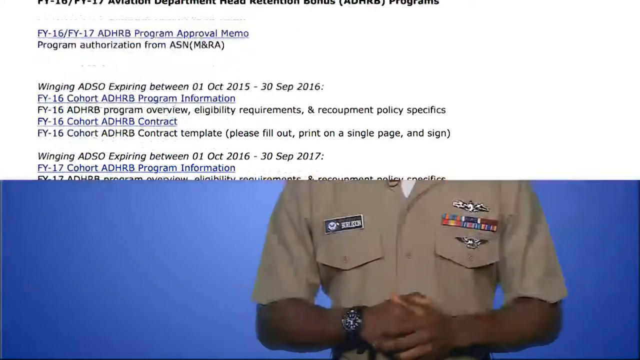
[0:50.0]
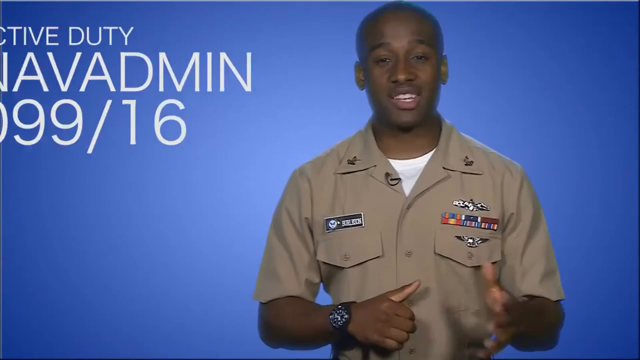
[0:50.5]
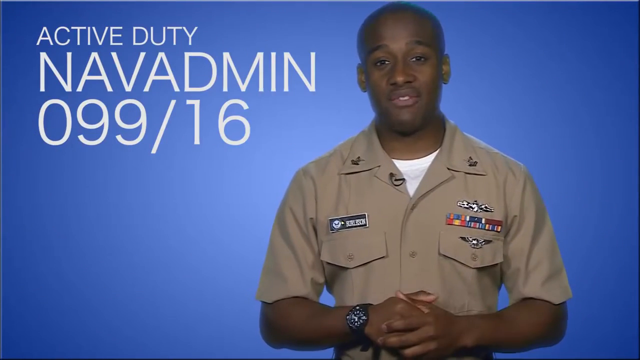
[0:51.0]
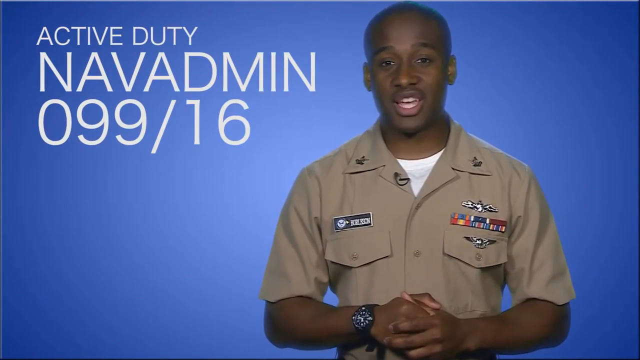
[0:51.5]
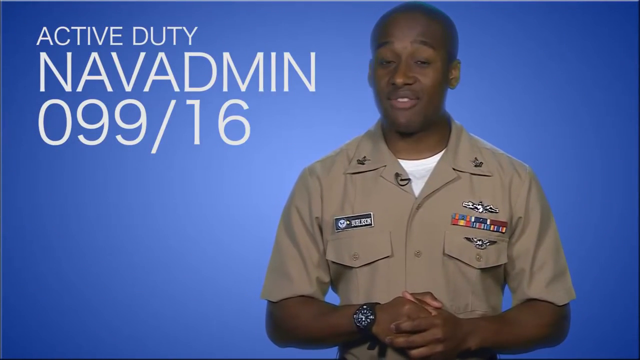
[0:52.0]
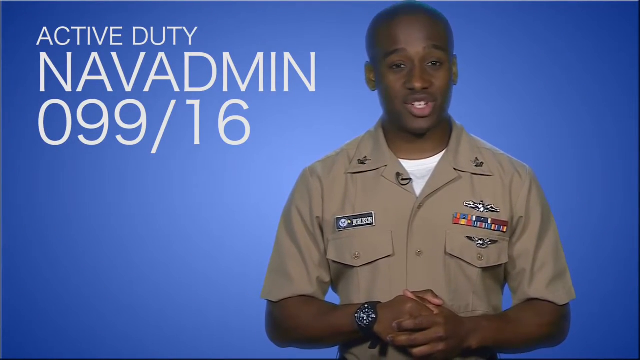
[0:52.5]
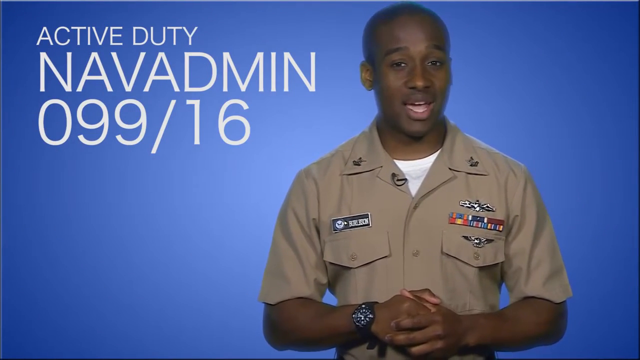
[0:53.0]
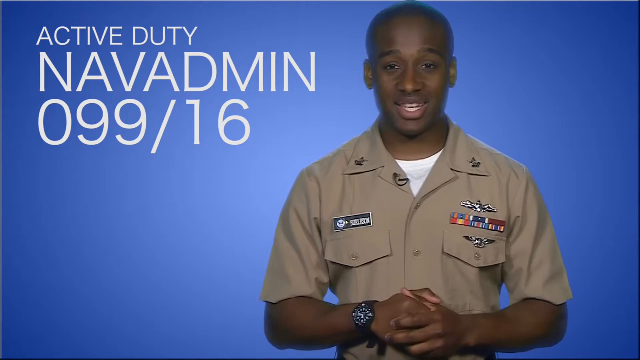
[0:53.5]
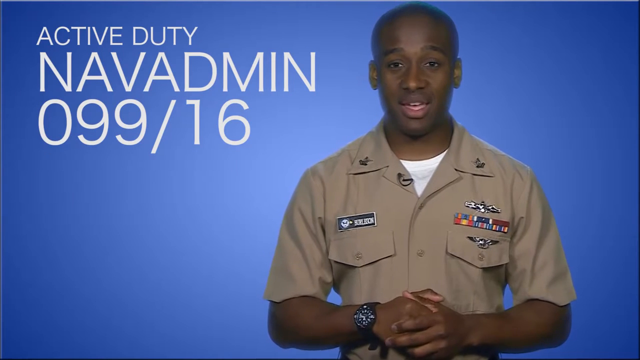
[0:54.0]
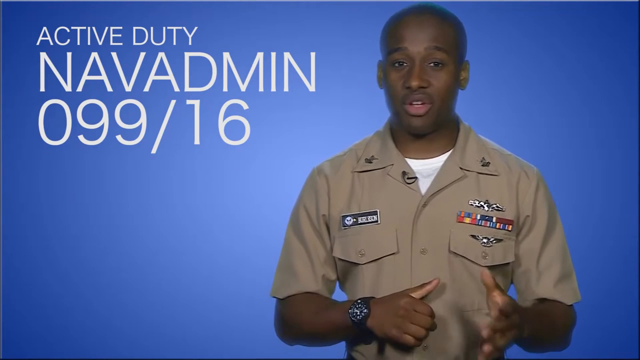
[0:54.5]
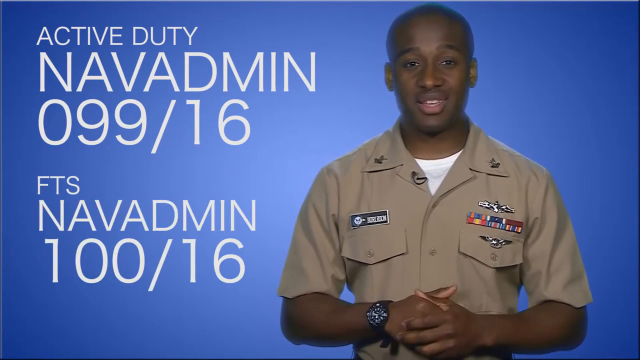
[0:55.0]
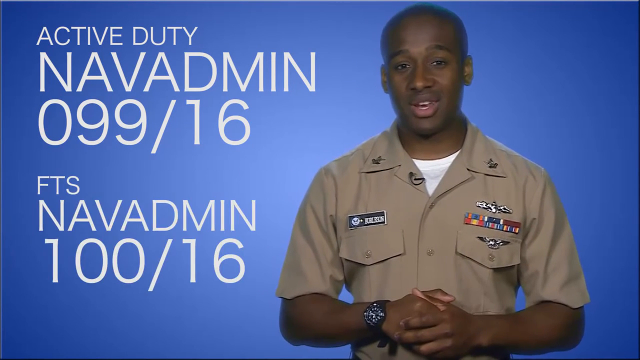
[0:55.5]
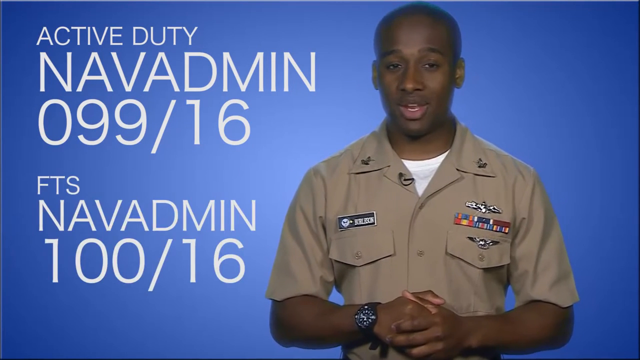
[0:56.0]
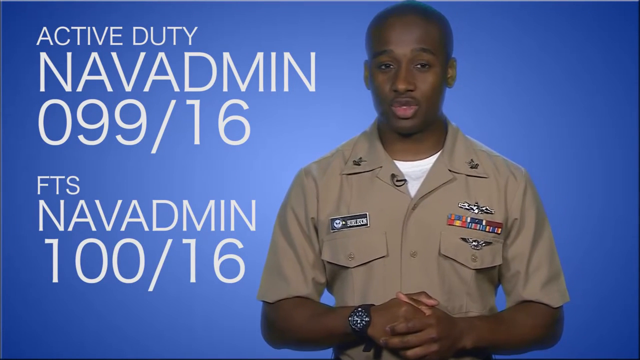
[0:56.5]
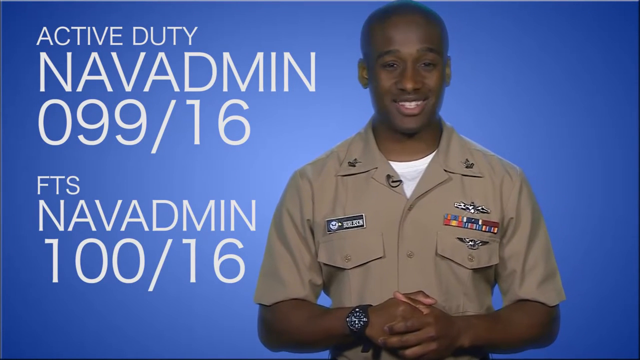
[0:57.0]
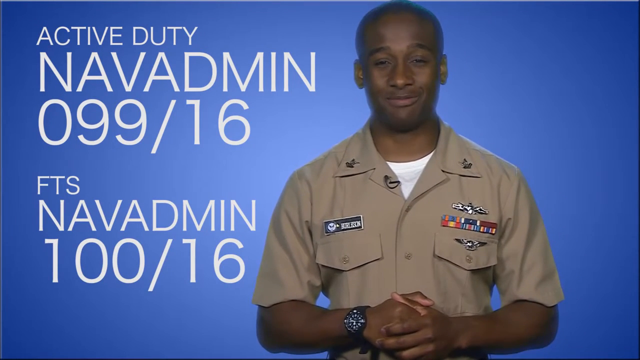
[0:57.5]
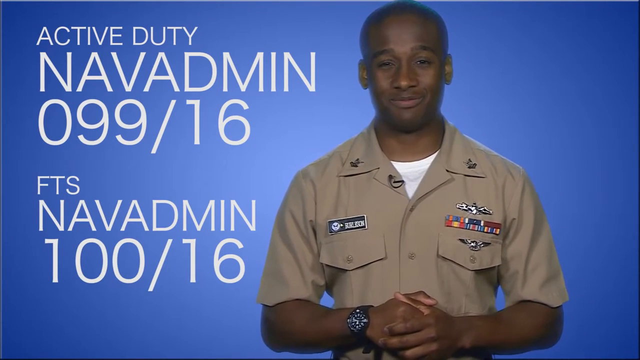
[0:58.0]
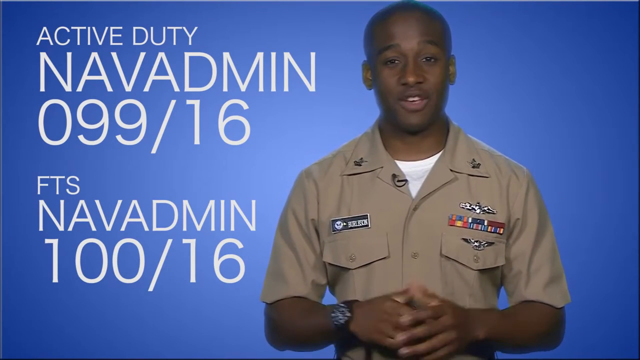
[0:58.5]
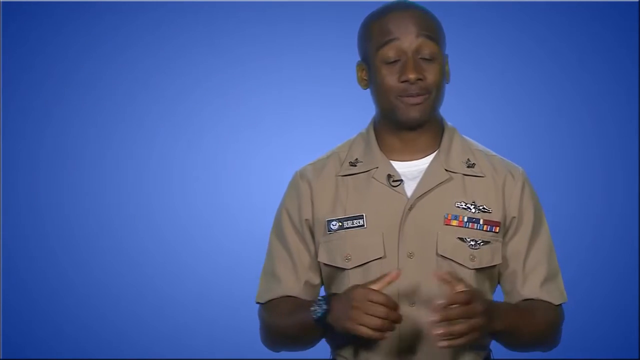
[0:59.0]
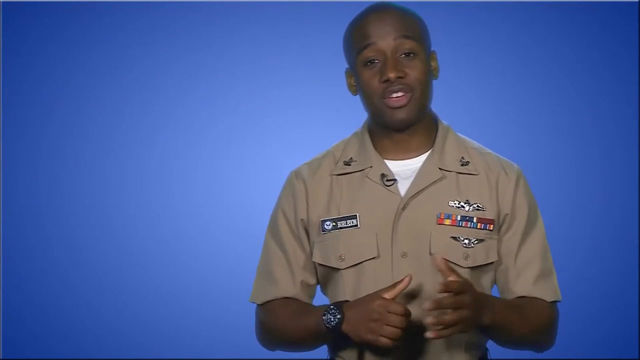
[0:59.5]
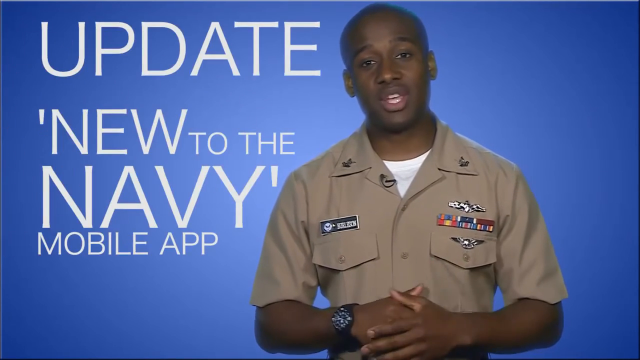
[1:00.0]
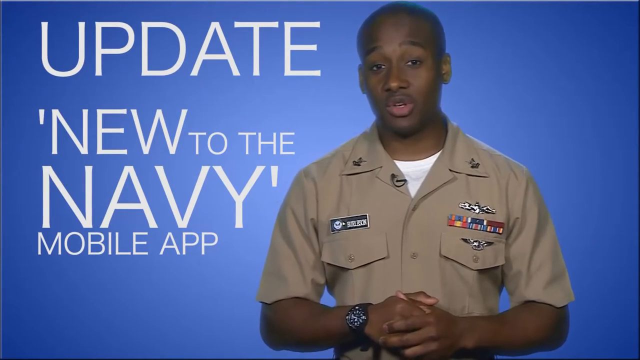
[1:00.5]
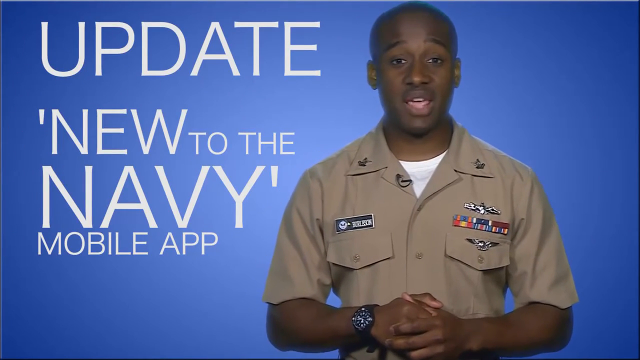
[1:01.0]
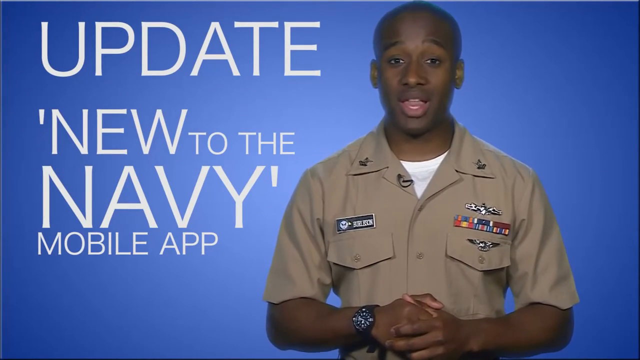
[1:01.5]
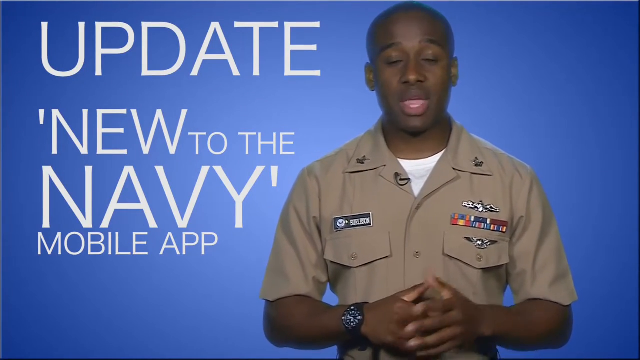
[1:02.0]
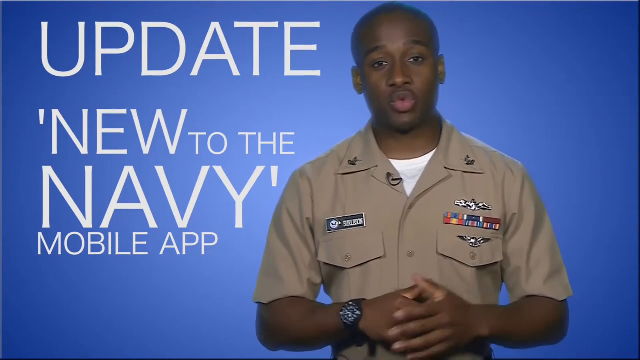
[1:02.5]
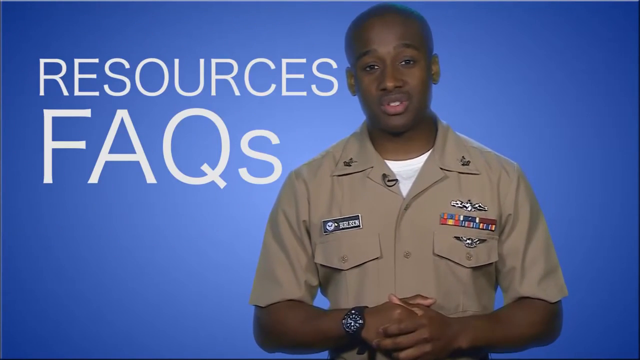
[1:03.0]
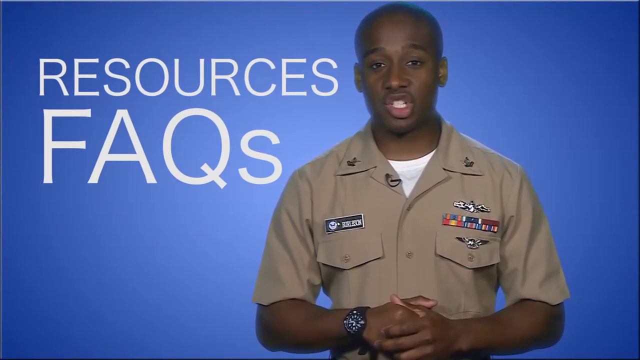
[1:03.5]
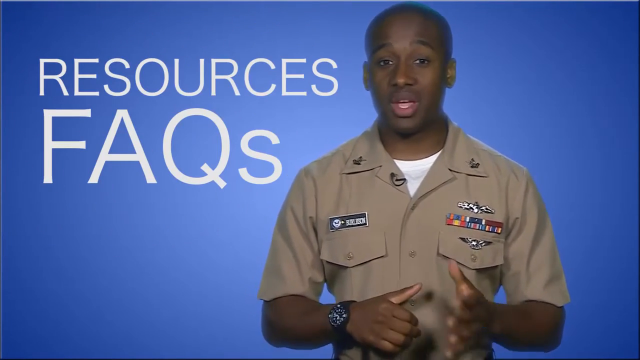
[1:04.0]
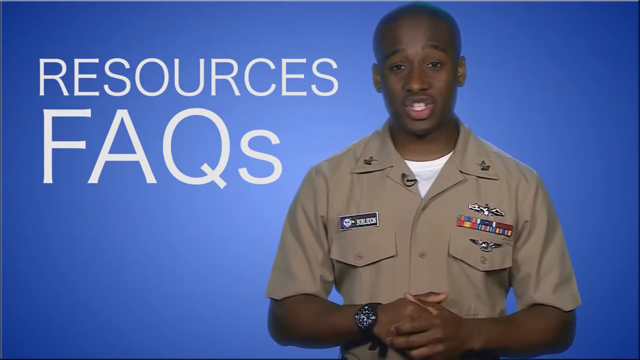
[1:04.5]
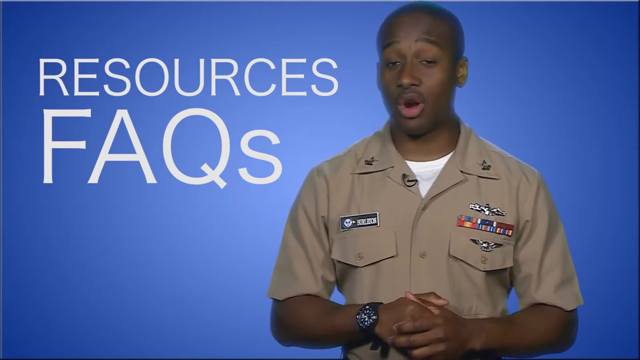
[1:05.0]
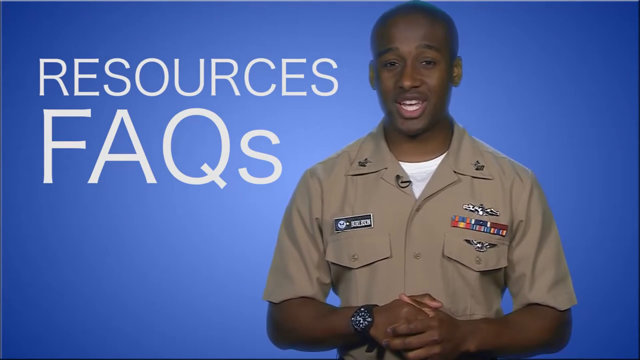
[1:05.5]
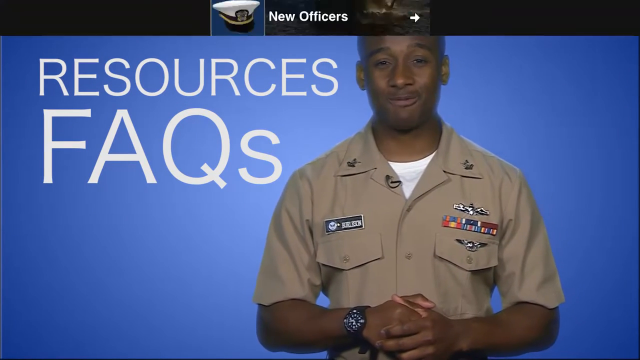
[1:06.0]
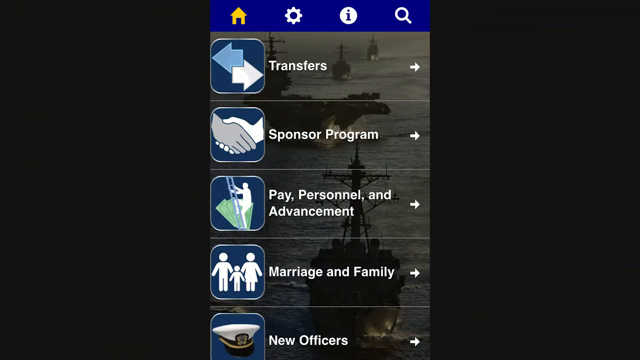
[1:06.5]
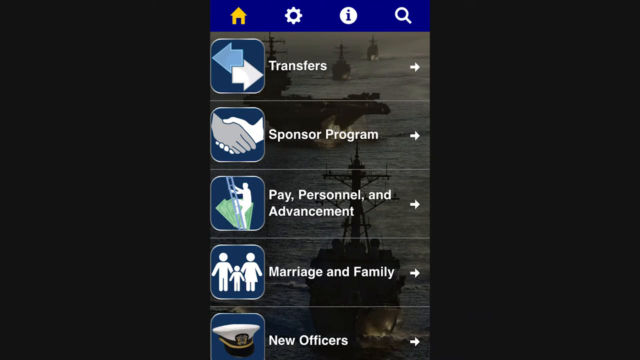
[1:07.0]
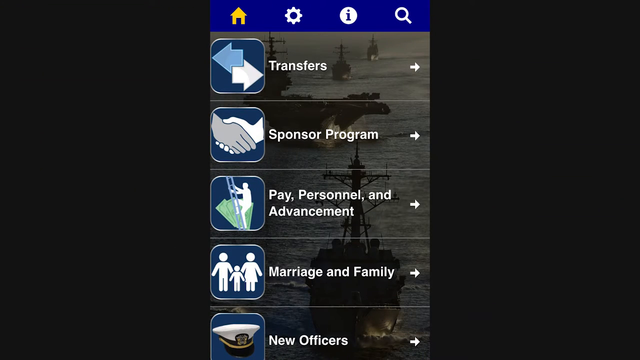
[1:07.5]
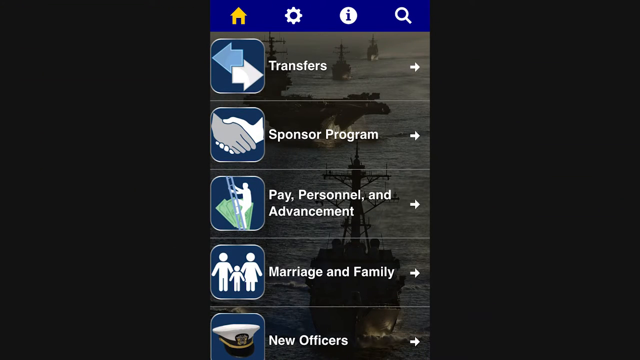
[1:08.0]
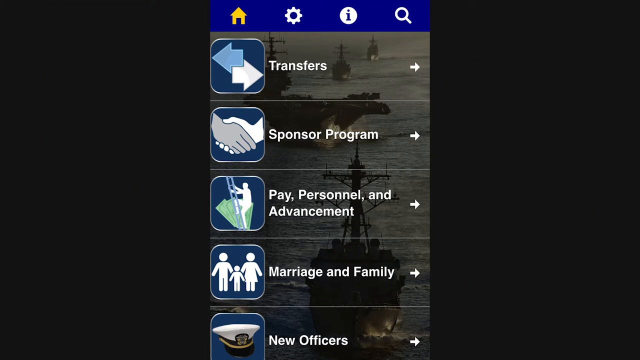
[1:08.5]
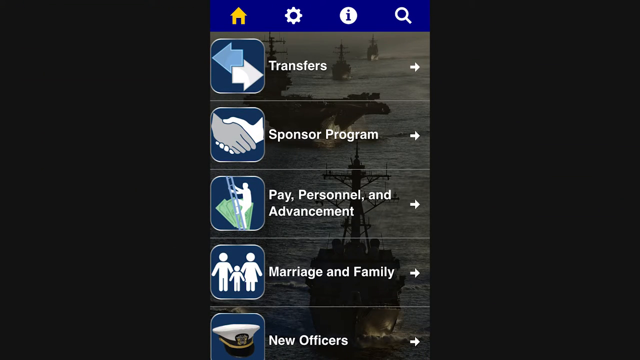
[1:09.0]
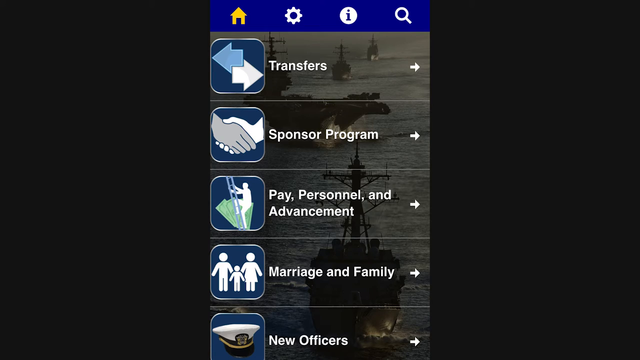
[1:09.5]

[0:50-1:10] The background is blue at the top, with blue covering the screen down to the bottom, where it becomes ombre blue and black. An African man is speaking in the center, smiling. He is dressed in military attire: a short-sleeved tan shirt with multiple colored award braids over the left pocket and what appears to be a wingman's pin over the left pocket. He has lapel pins on both collars and wears a detachable microphone clipped to his right collar. Under the tan shirt he wears a white t-shirt. As he talks directly to the camera, his hands make routine gestures, and white lettered graphics appear on the left side of the screen reading "ACTIVE DUTY, NAVADMIN" in all capital letters with "099/16" underneath.